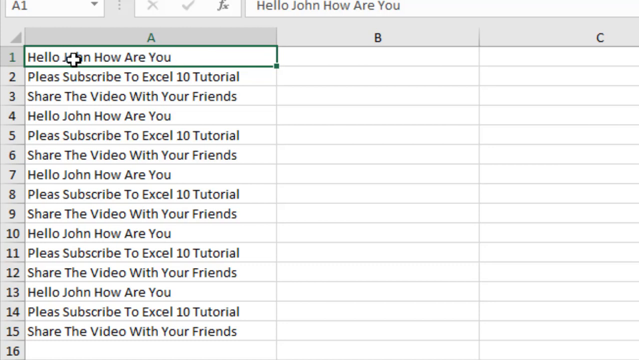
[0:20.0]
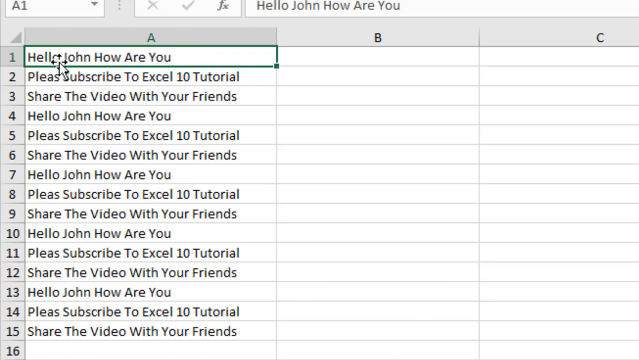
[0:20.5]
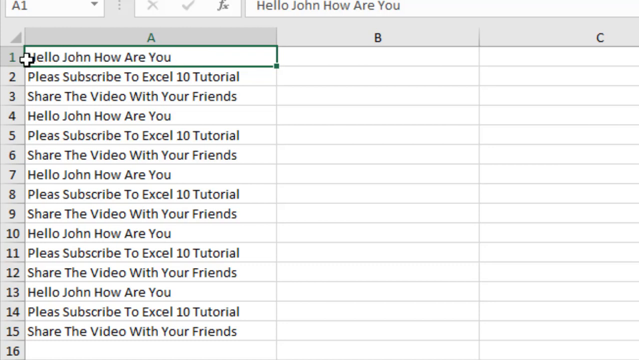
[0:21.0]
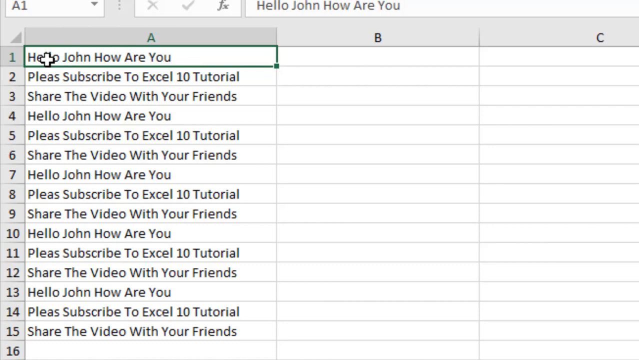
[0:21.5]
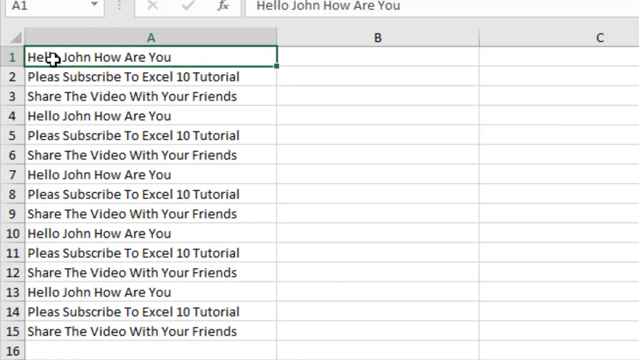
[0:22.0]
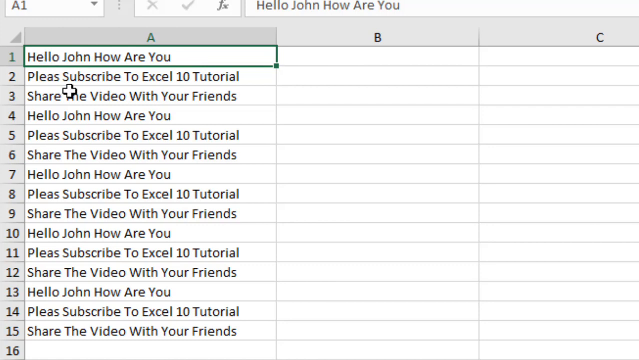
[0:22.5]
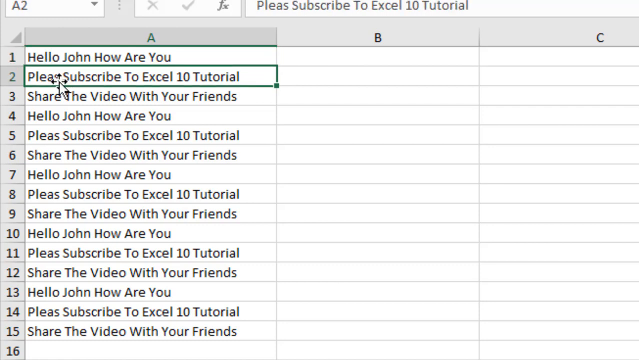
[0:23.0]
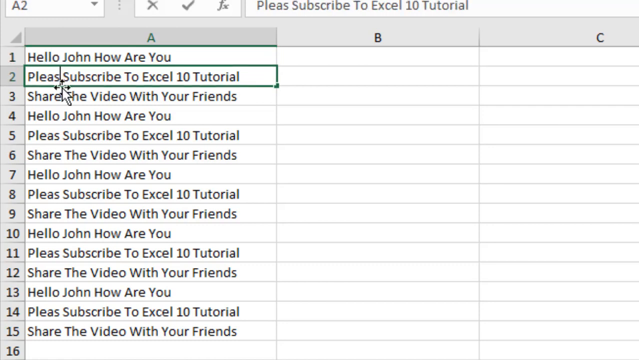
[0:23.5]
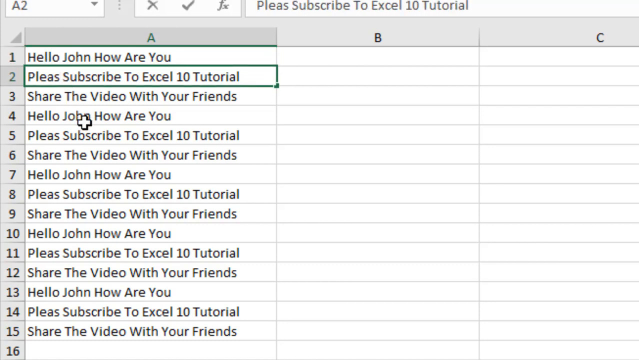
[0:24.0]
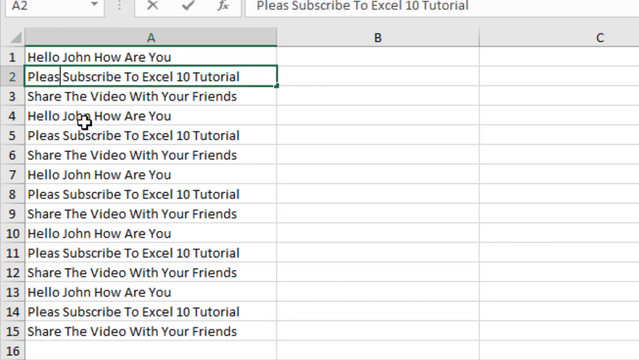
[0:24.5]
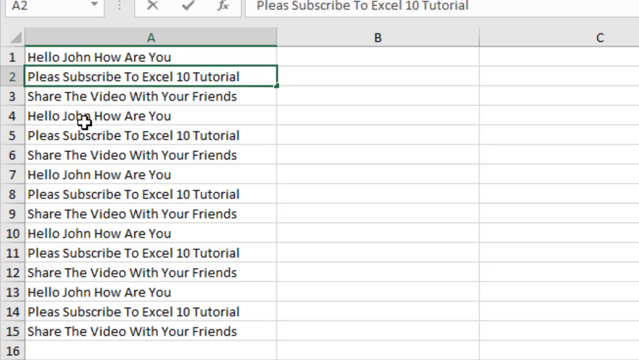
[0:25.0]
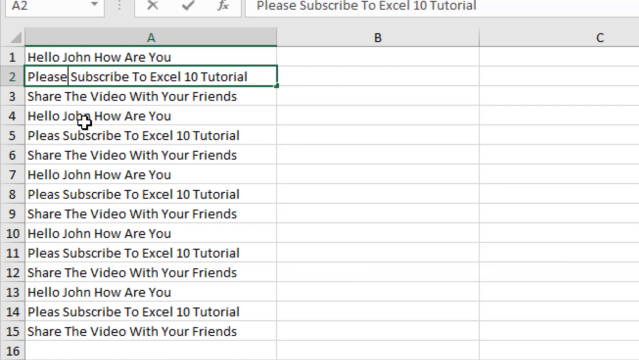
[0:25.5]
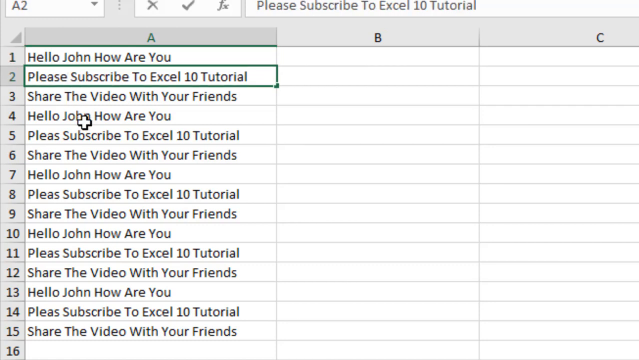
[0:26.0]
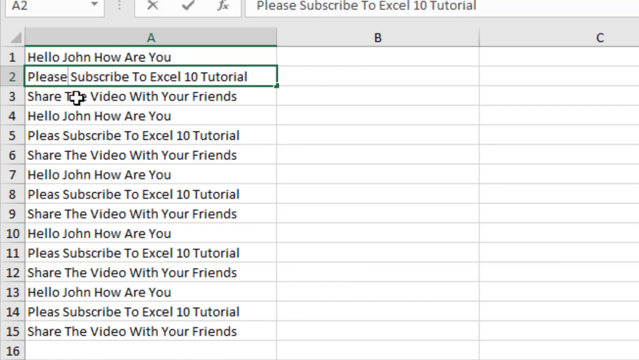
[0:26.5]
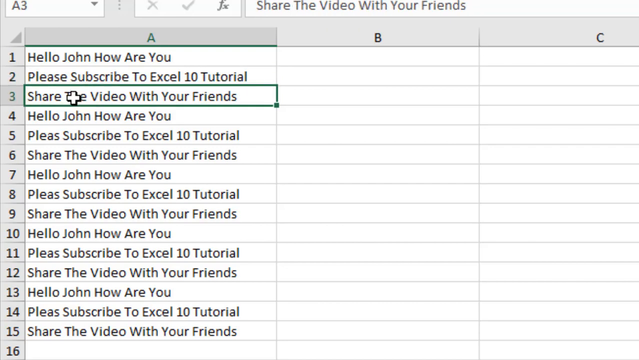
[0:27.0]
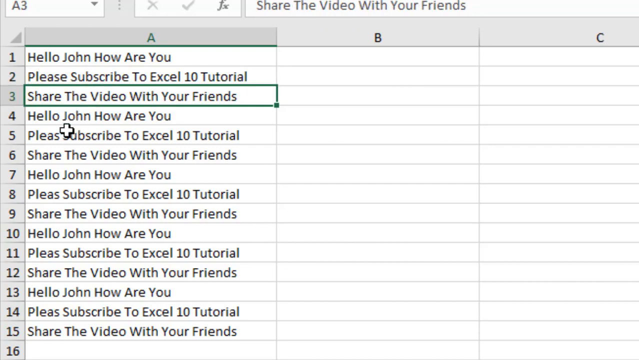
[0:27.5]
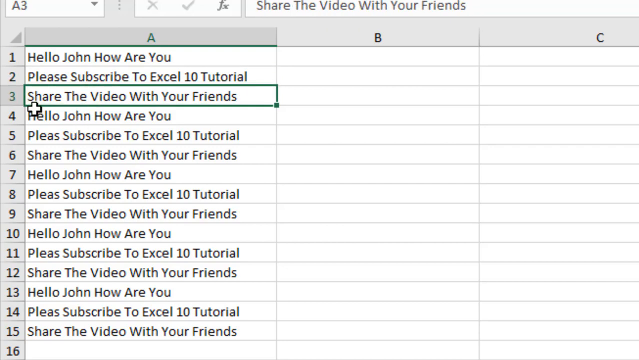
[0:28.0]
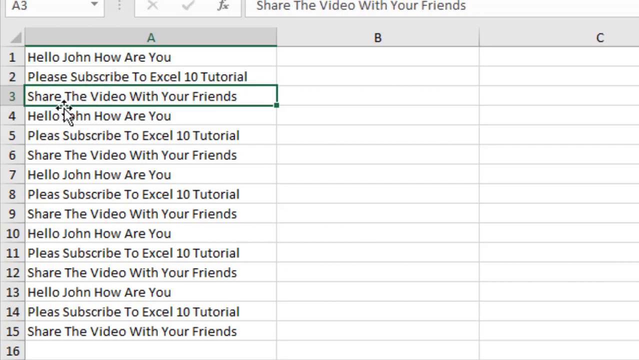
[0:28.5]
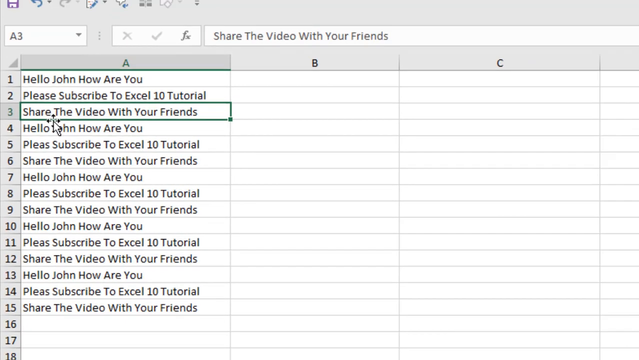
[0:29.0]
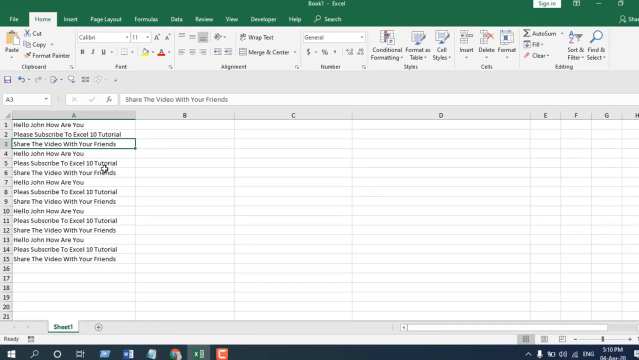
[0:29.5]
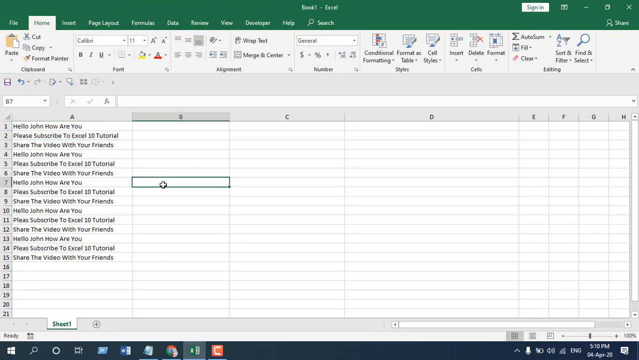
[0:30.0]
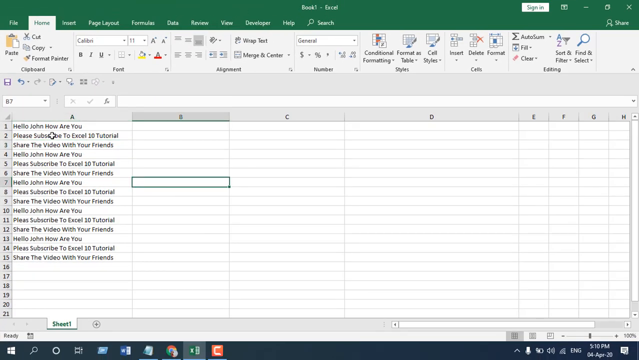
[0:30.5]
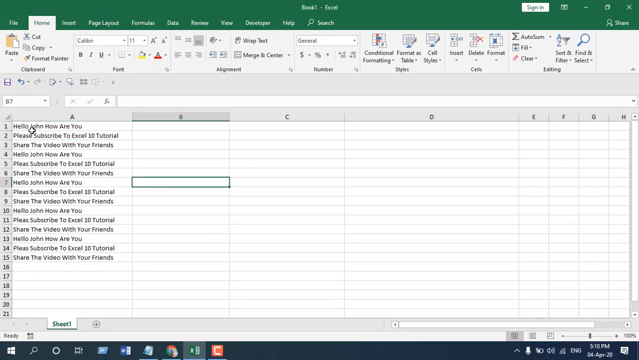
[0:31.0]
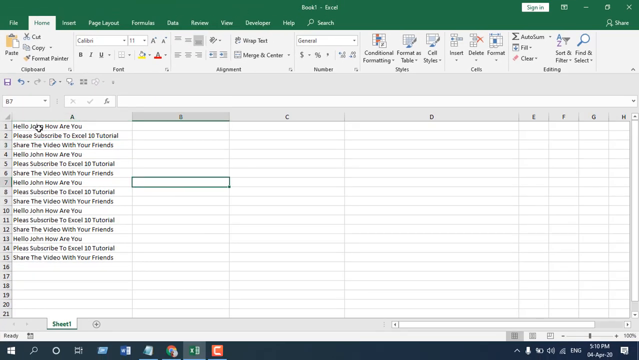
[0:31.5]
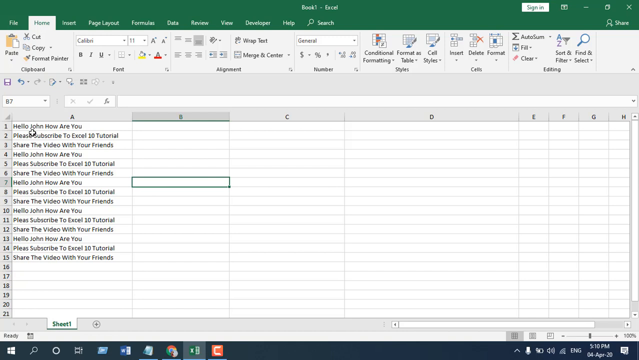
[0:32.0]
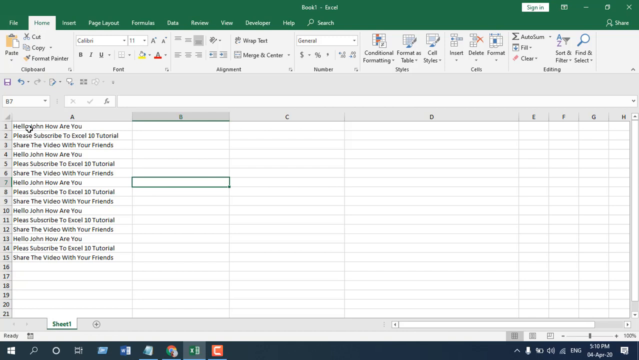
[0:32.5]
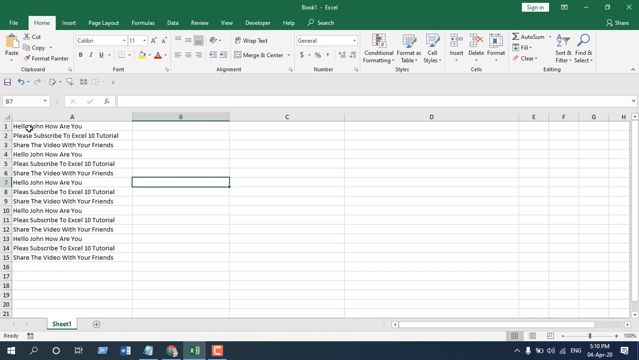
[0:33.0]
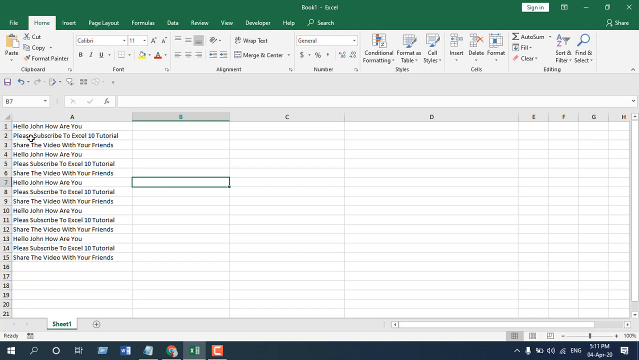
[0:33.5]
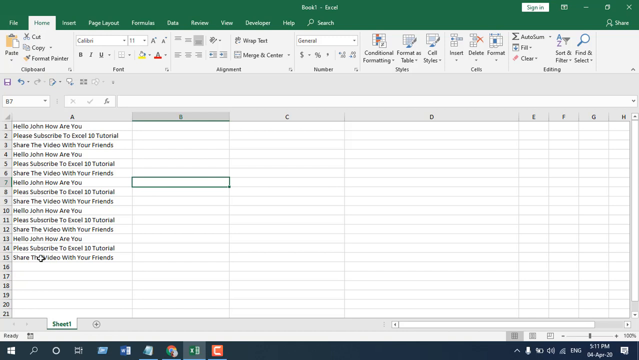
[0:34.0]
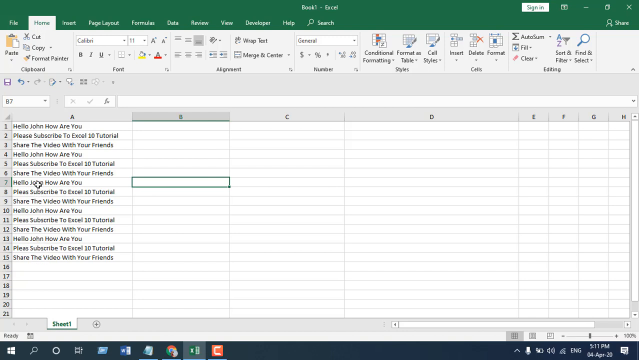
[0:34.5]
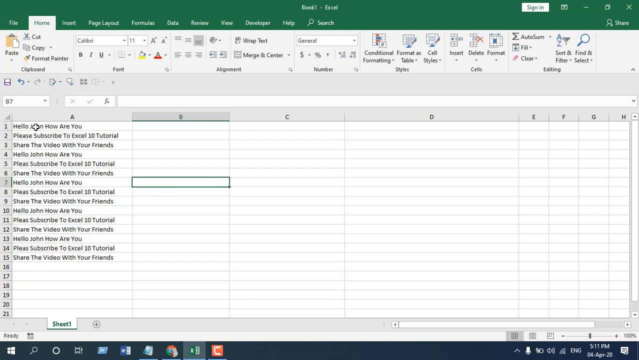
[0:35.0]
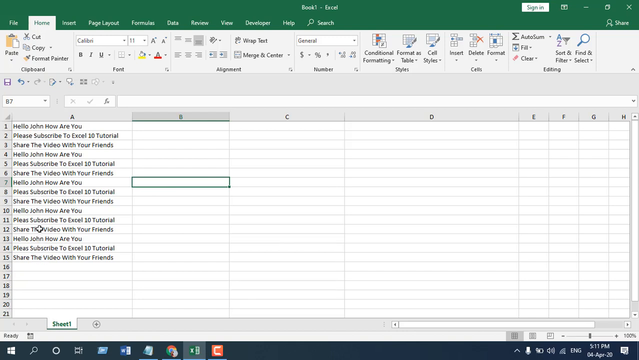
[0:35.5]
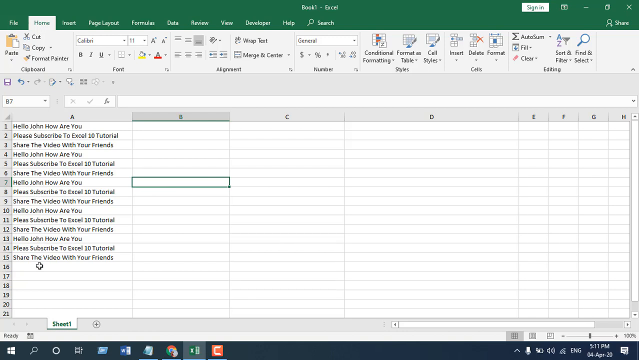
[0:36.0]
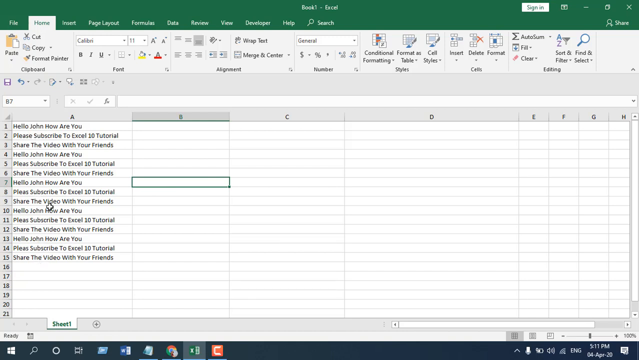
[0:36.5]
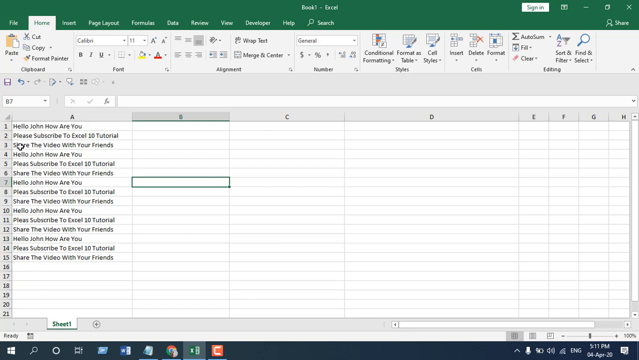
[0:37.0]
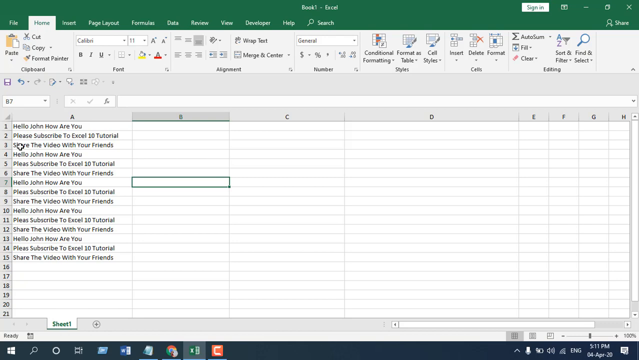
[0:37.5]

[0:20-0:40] The person continues clicking on cells in column A. First they click on the second row, A2, which reads "please subscribe to Excel 10 Tutorial" but without an E at the end. They click on that cell, then on the A2 text, and then move on to the third cell, A3, which reads "share the video with your friends"; nothing is done with it. Next they appear to click on B7, zooming out as they do so, but they still seem to be looking through column A, possibly looking for more mistakes.